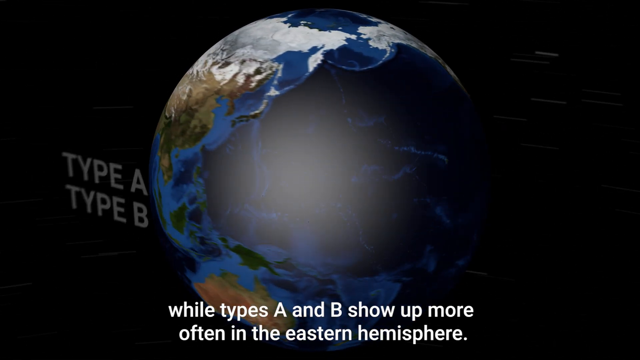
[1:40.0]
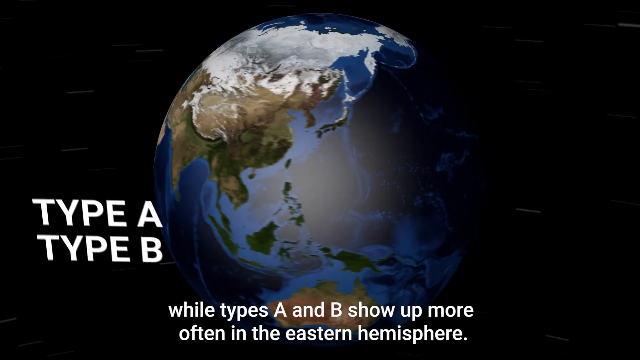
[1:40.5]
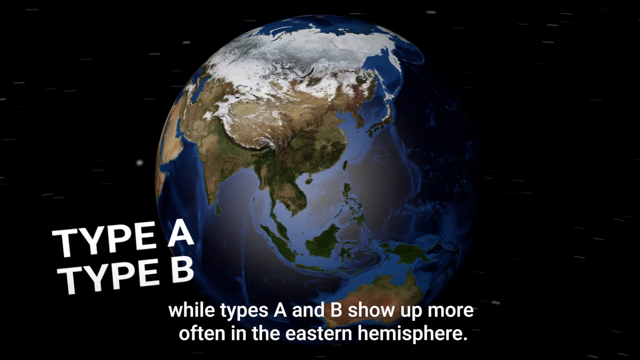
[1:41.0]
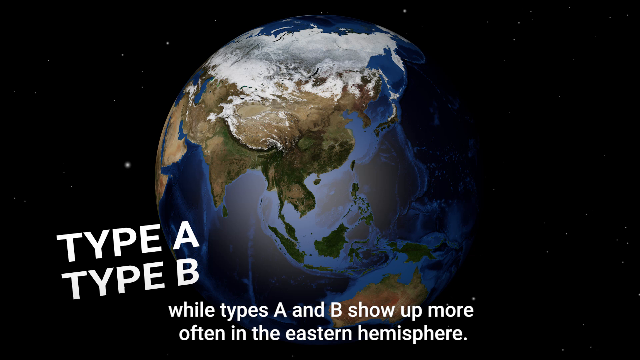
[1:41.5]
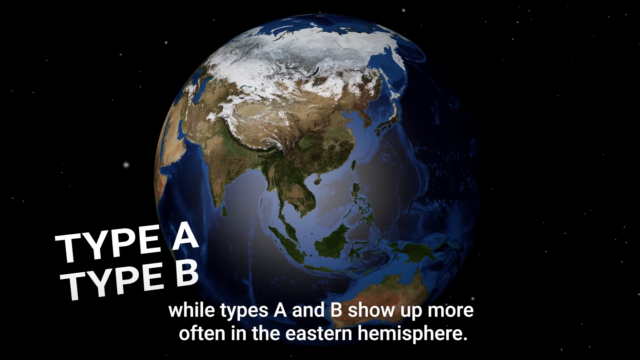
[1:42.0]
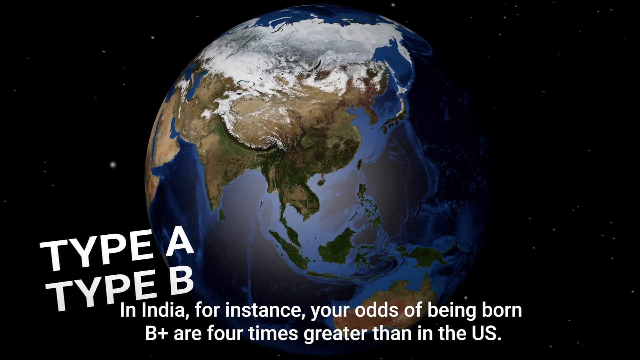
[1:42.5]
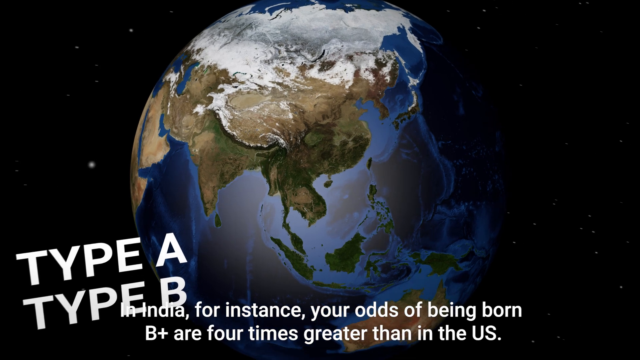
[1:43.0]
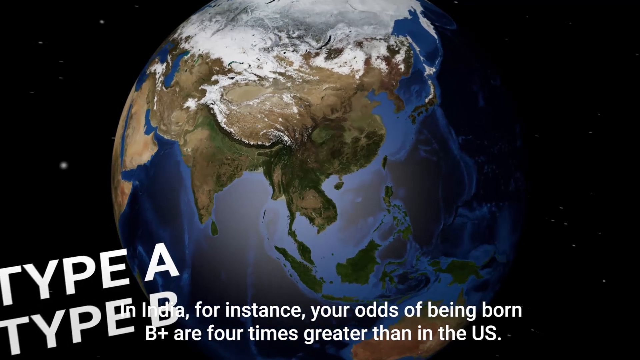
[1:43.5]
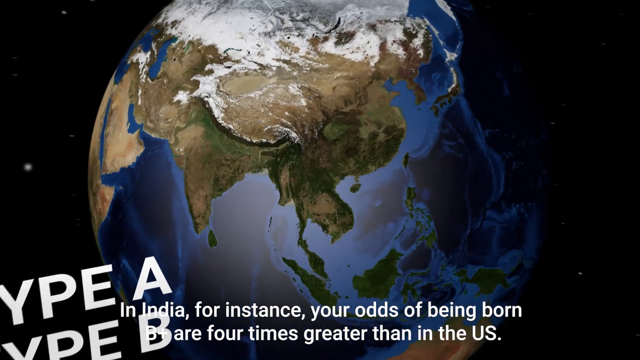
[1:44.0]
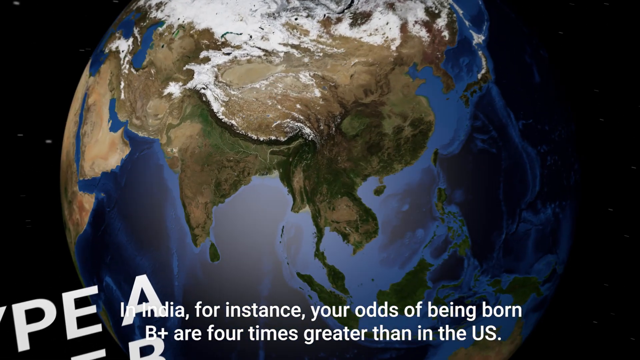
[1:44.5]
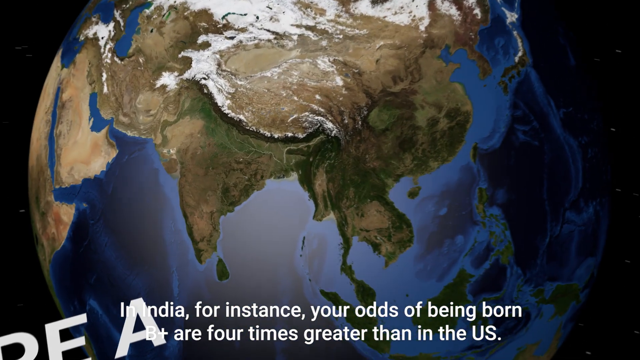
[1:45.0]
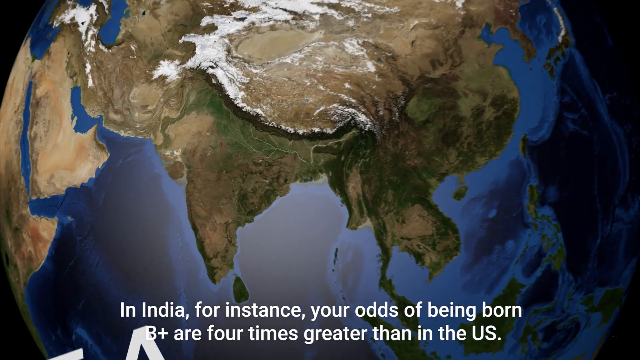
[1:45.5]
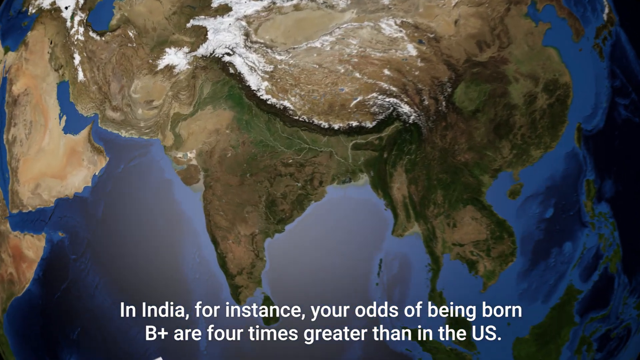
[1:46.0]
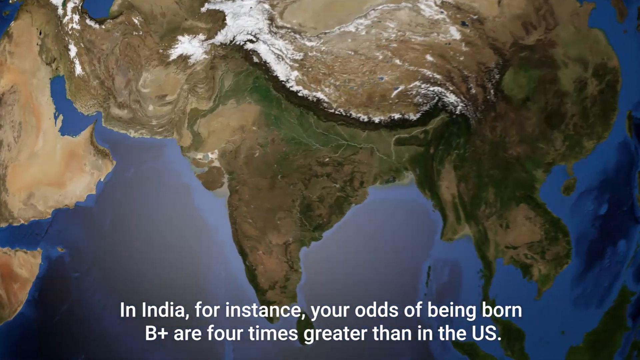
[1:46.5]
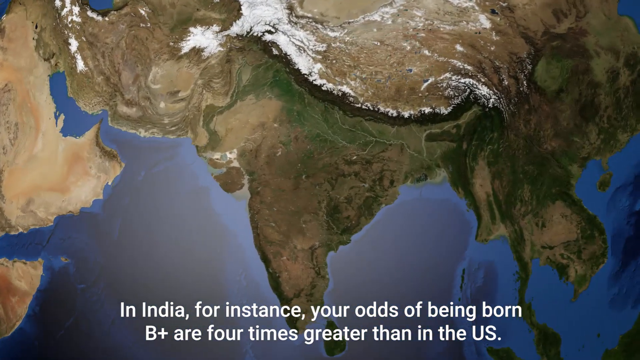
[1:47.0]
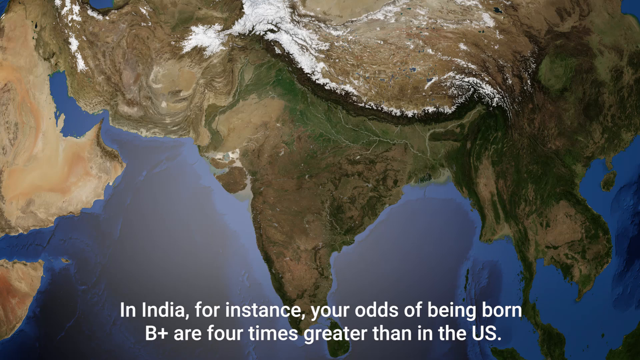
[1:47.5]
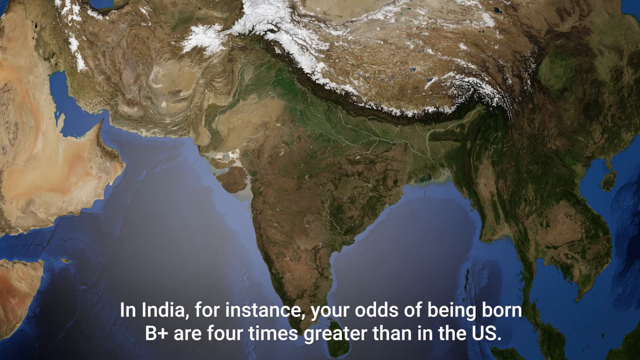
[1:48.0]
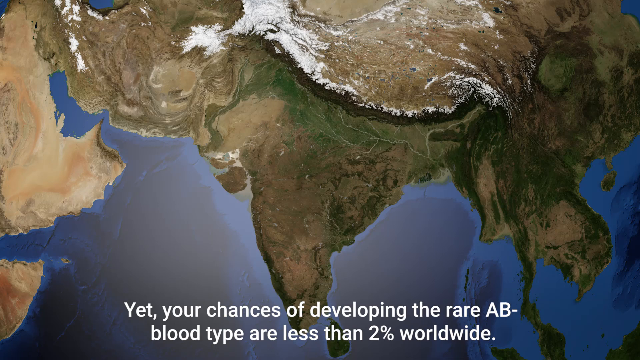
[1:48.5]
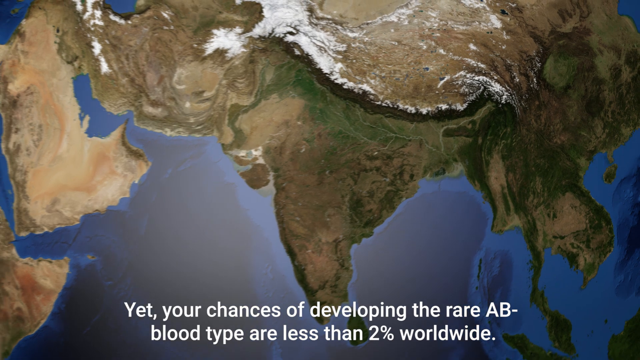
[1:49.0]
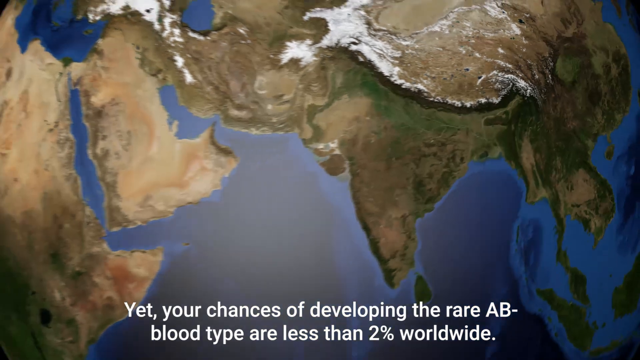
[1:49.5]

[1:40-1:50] The text continues: "types A and B show up more often in the eastern hemisphere." Types A and B are shown mostly in places like Australia, Russia, and Europe. The view then kind of zooms in on what looks like India, and text at the bottom says "in India, for instance, your odds of being born B plus are four times greater than in the US," followed by "your chances of developing rare AB minus blood type are less than 2% worldwide." The view then zooms out and moves more toward the western hemisphere.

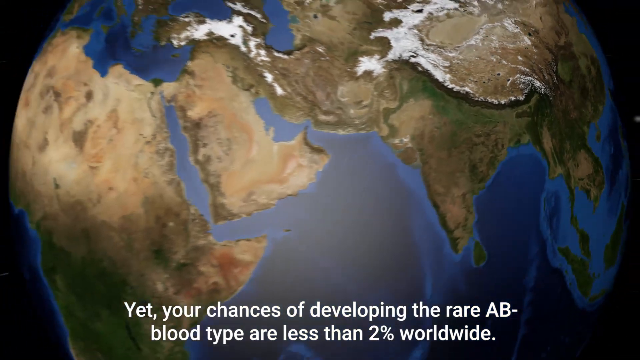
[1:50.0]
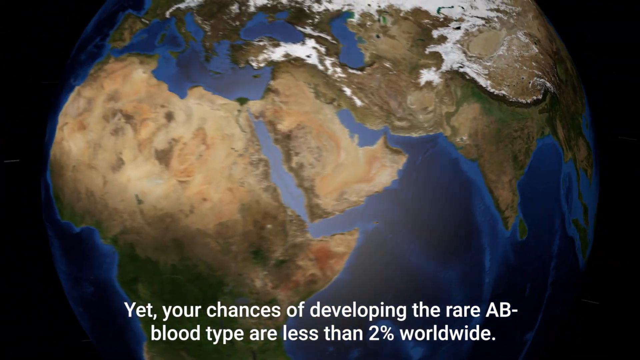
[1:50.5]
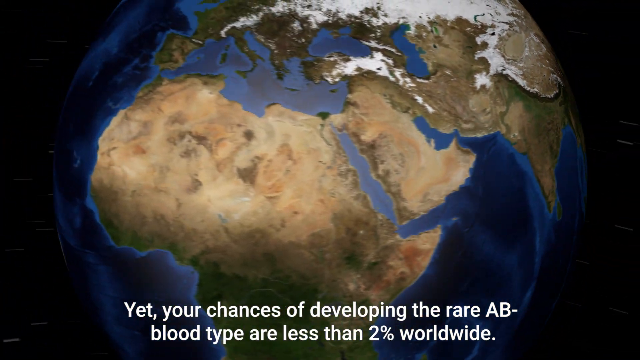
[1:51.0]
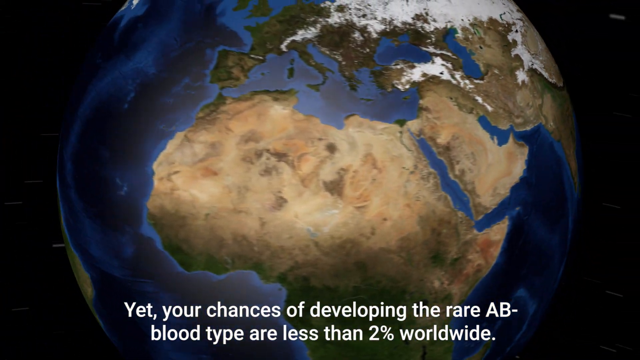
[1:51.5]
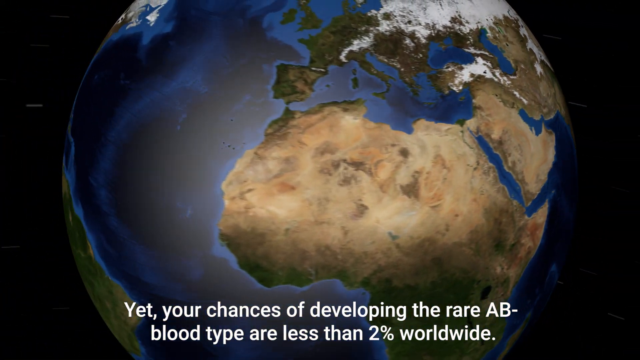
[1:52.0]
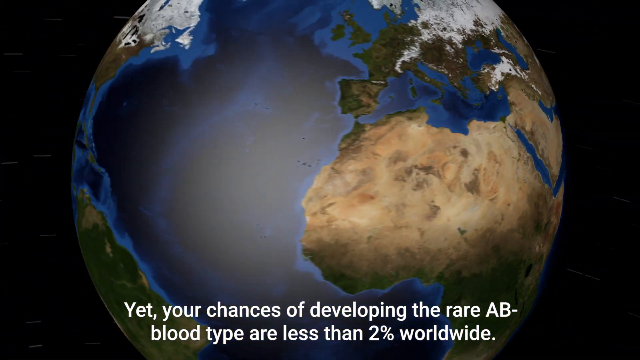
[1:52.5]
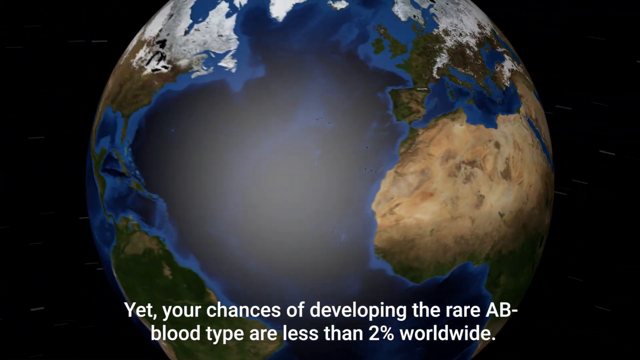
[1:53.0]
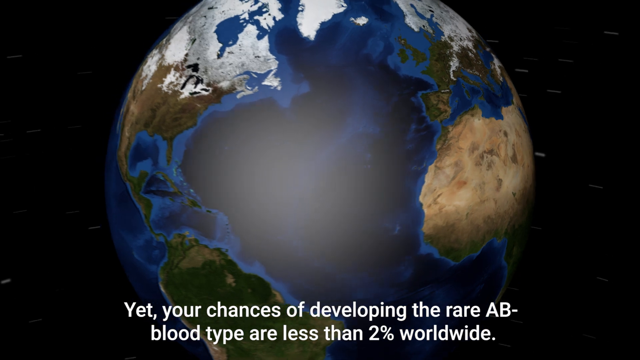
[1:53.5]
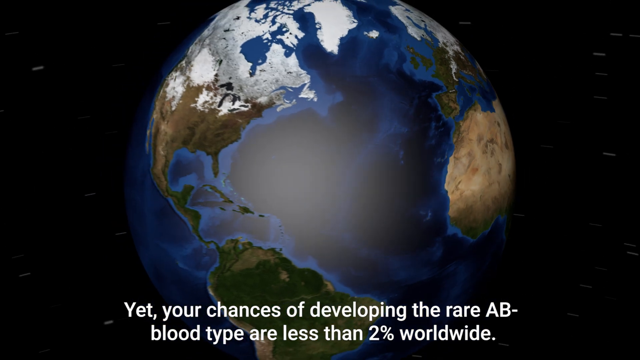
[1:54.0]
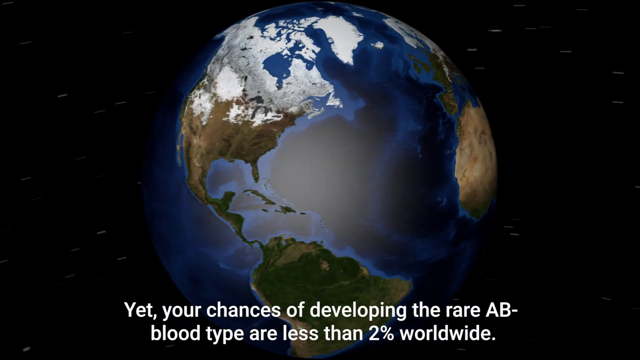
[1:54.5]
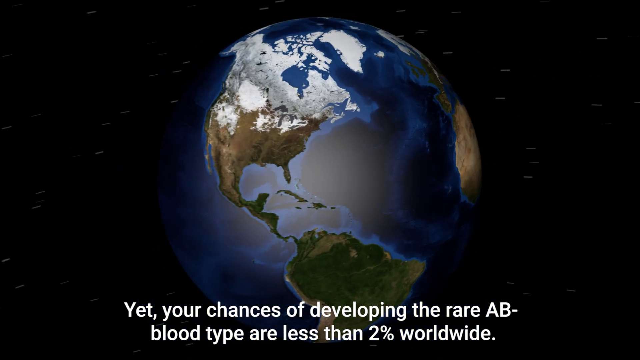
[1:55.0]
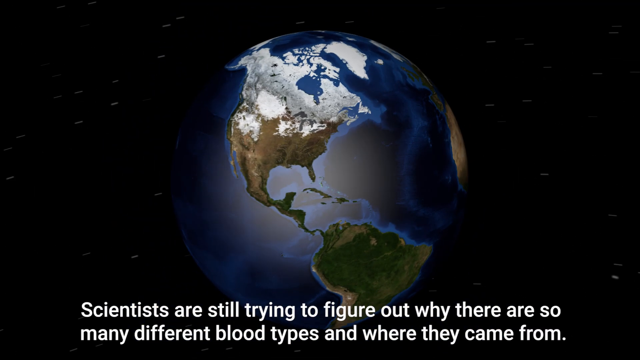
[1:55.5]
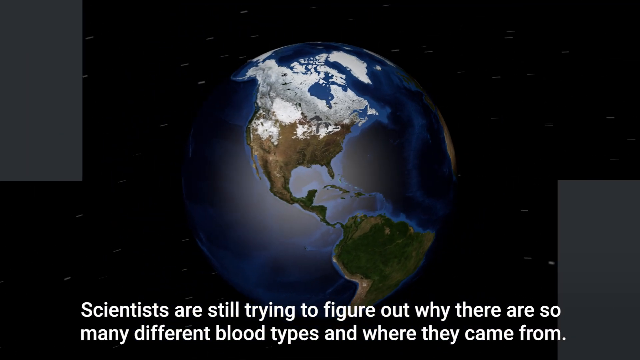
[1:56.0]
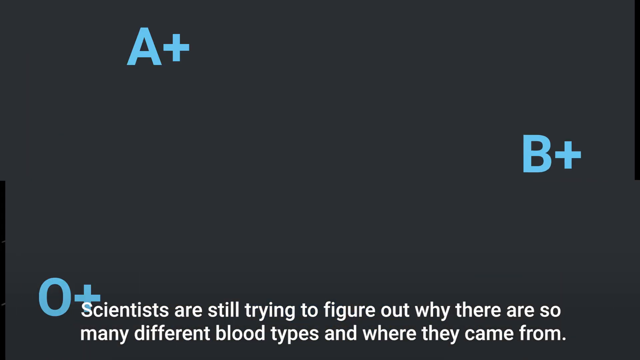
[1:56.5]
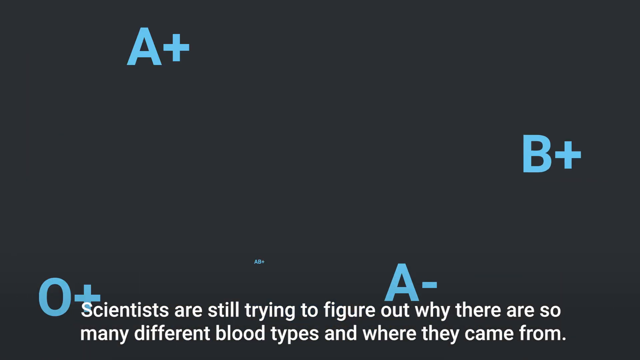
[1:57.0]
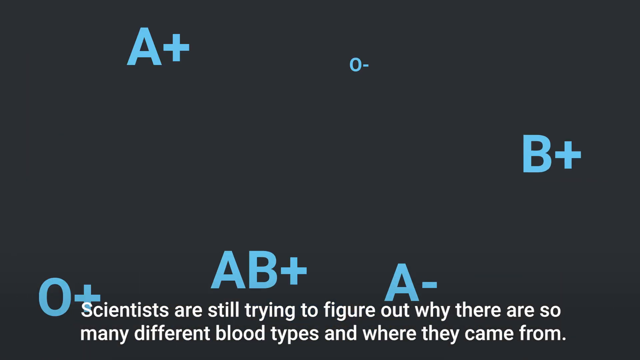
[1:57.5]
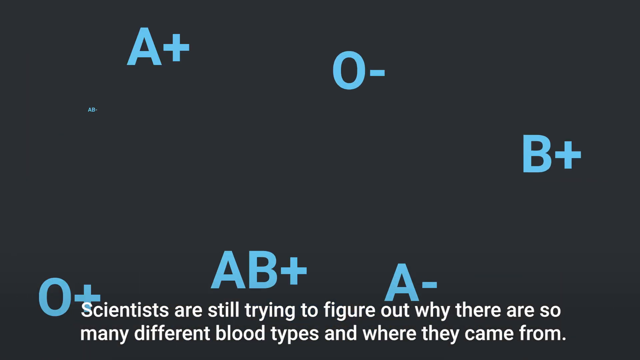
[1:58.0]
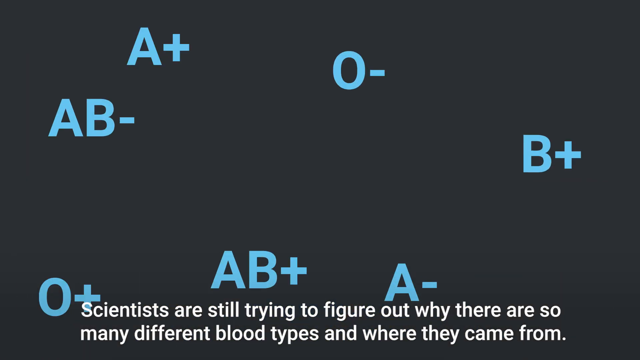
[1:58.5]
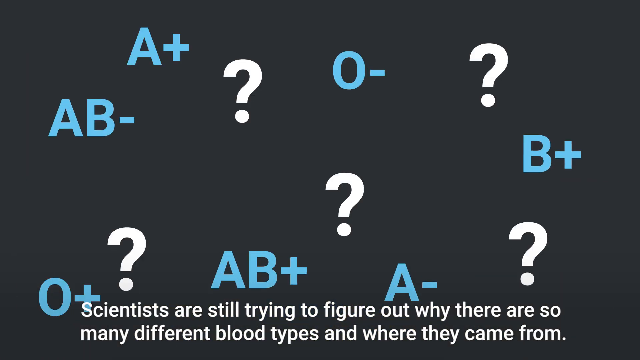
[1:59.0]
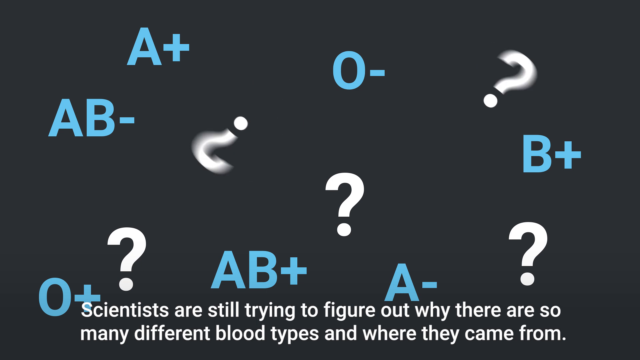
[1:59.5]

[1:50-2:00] More footage of the Earth circling around, kind of panning to the left. Subtitles come up at the bottom saying "scientists are still trying to figure out why there are so many different blood types and where they came from." A lot of different blood types pop up on screen: A+, AB-, O-, B+, A-, AB+, and O+, along with many animated question marks flipping and moving around the screen.